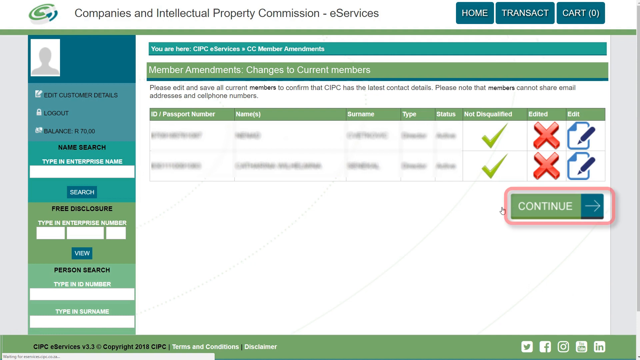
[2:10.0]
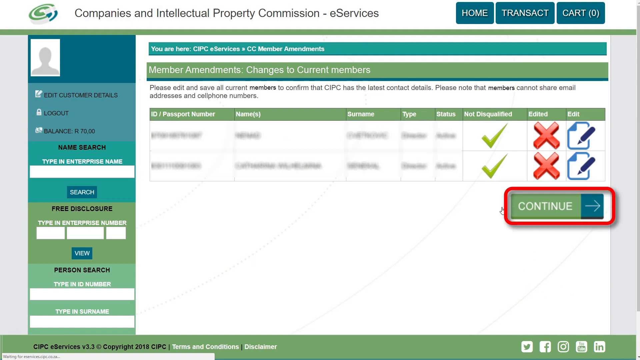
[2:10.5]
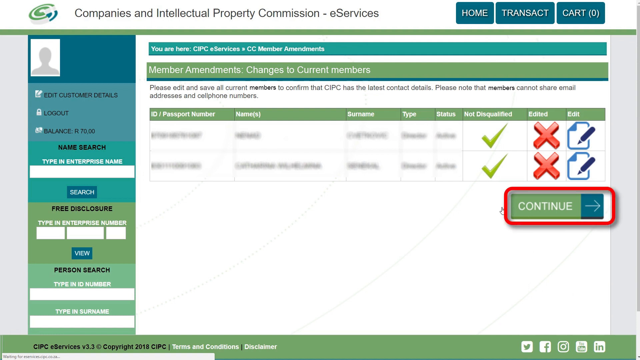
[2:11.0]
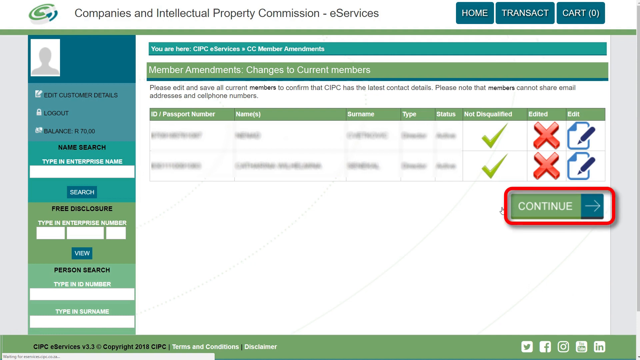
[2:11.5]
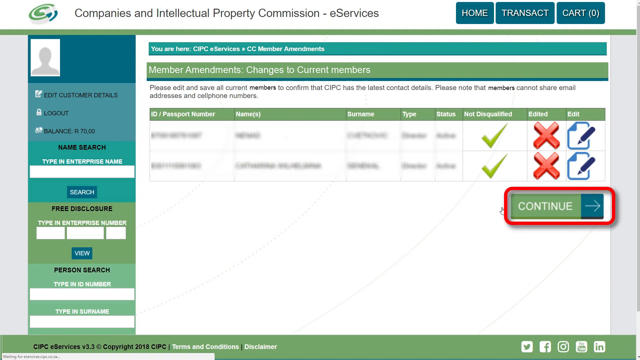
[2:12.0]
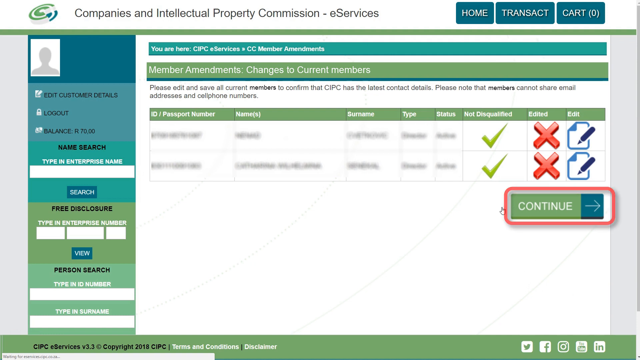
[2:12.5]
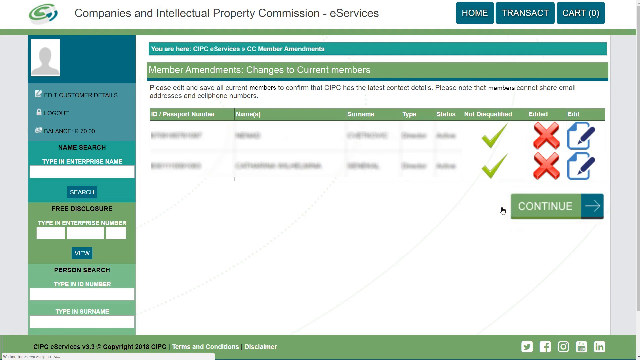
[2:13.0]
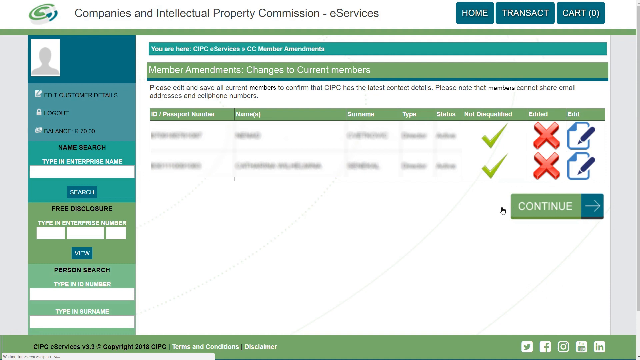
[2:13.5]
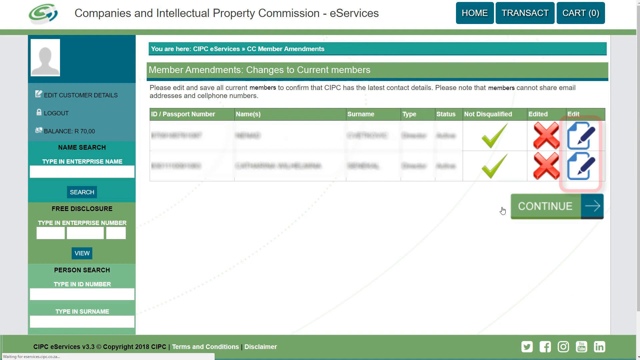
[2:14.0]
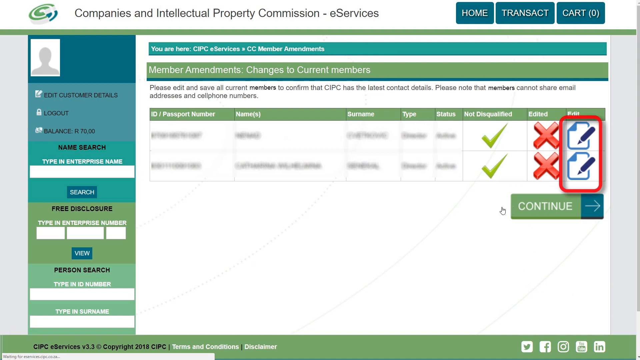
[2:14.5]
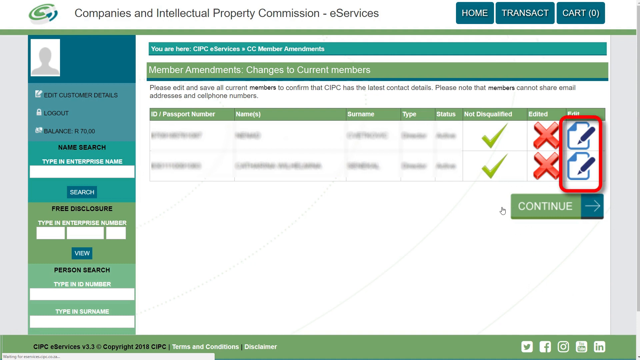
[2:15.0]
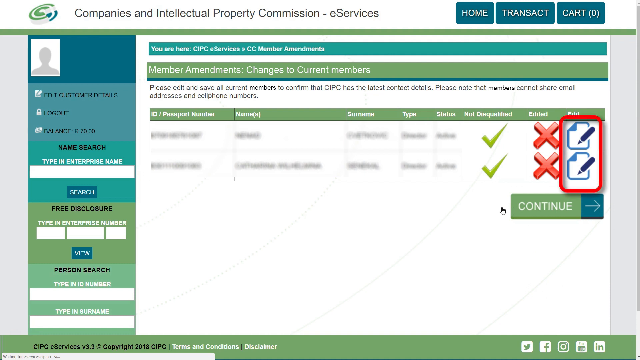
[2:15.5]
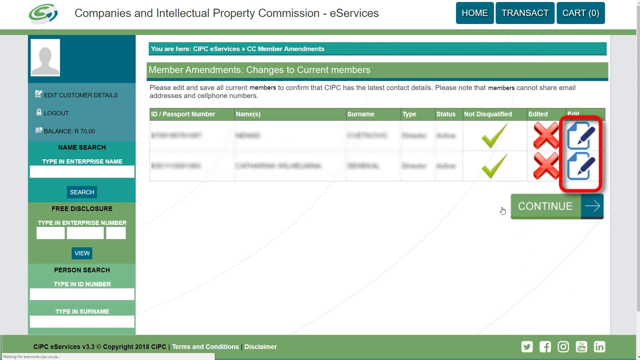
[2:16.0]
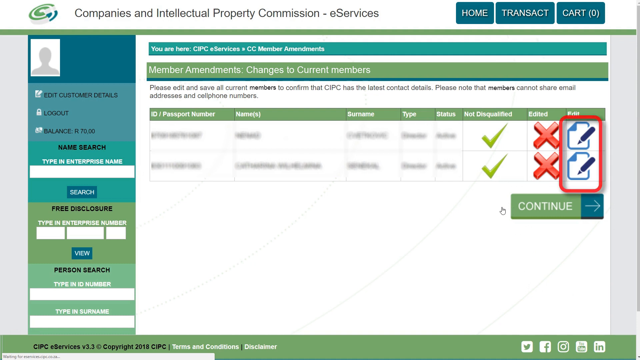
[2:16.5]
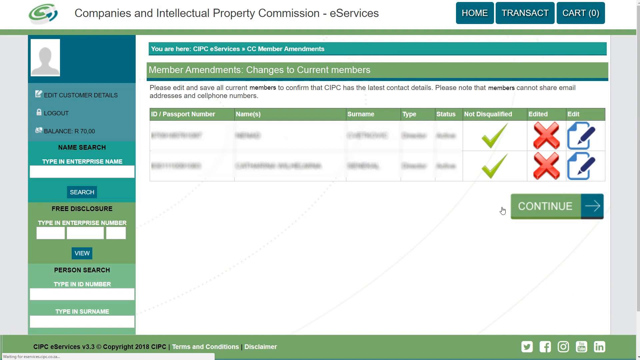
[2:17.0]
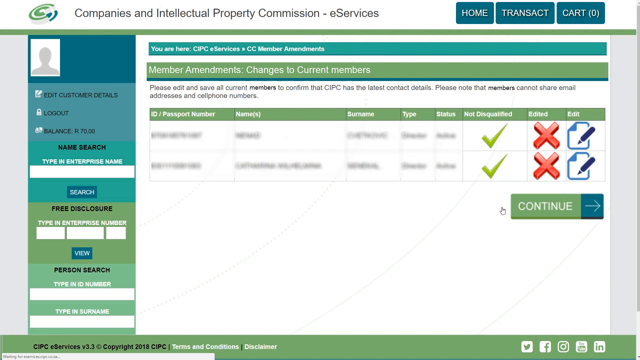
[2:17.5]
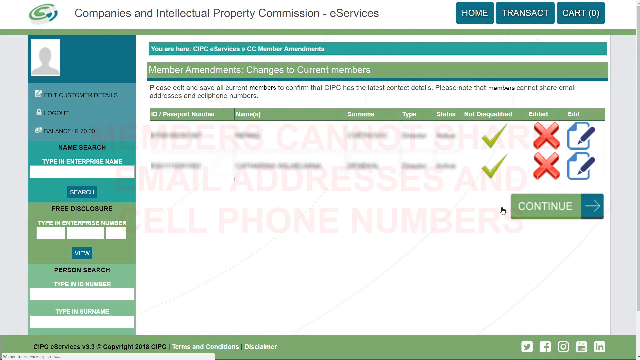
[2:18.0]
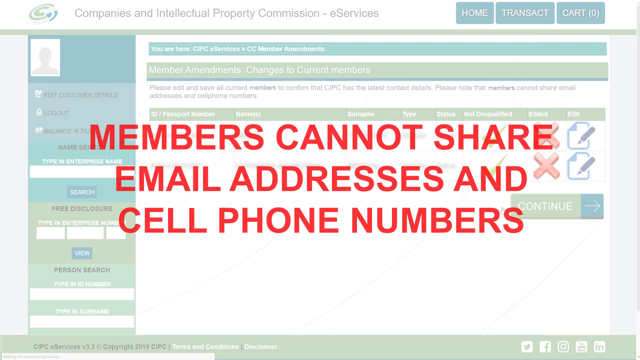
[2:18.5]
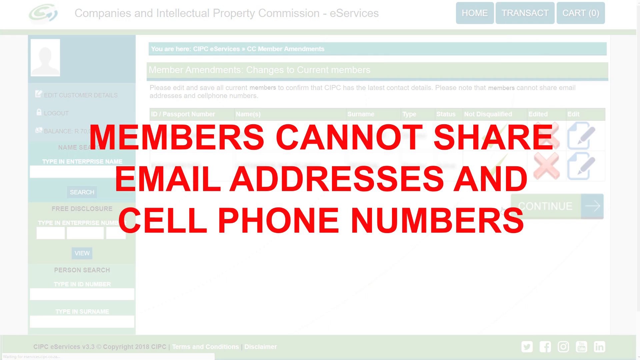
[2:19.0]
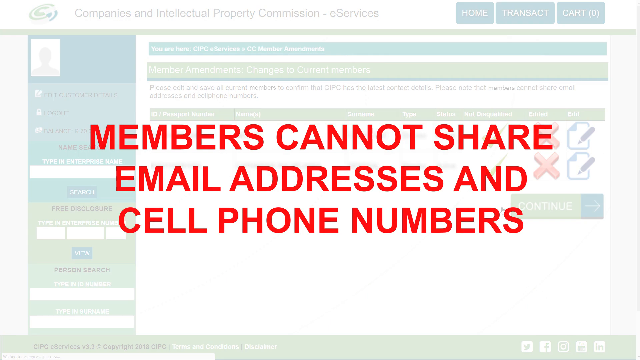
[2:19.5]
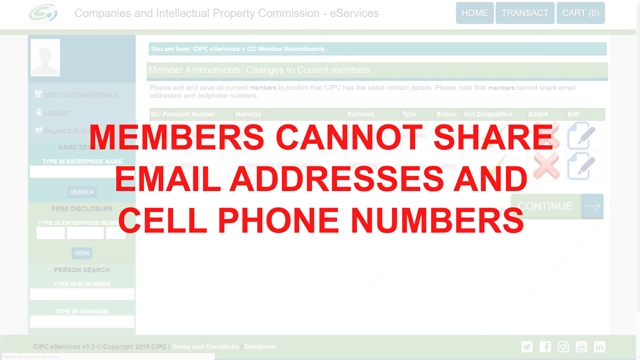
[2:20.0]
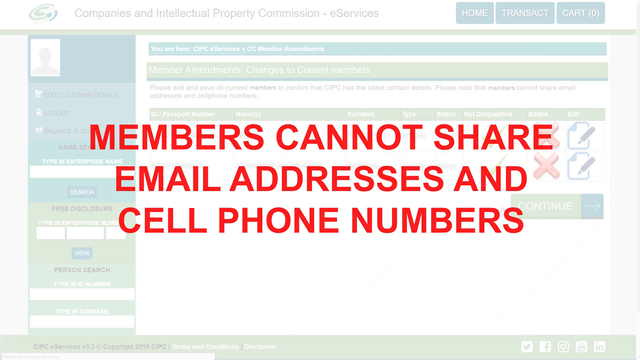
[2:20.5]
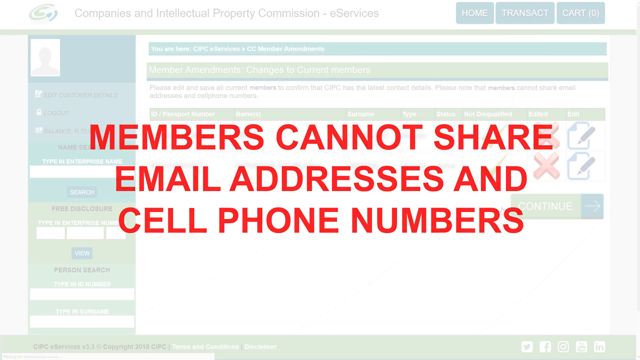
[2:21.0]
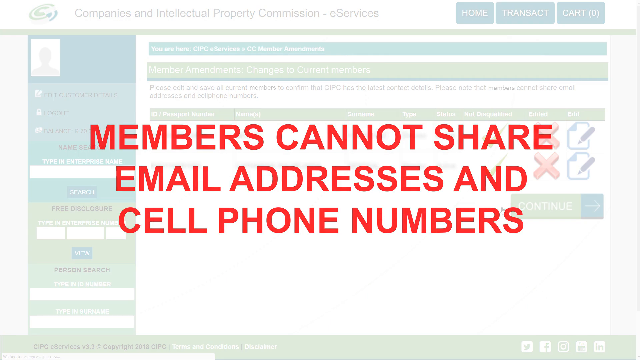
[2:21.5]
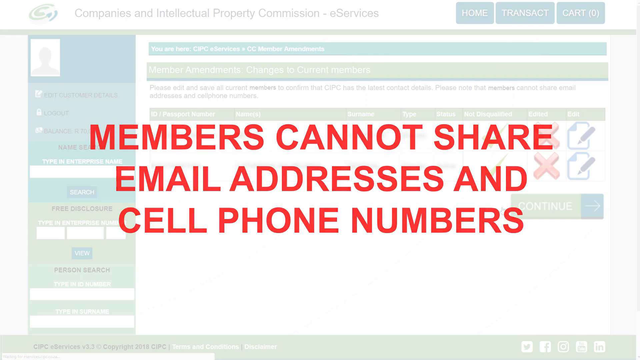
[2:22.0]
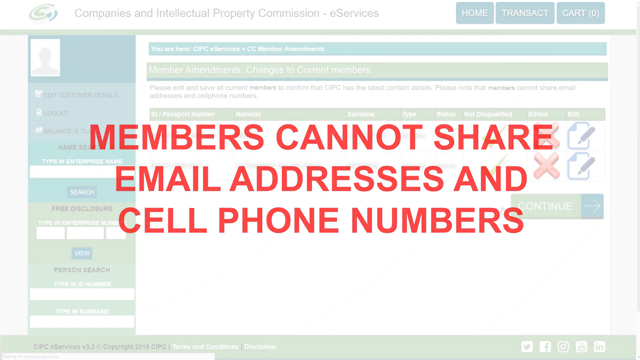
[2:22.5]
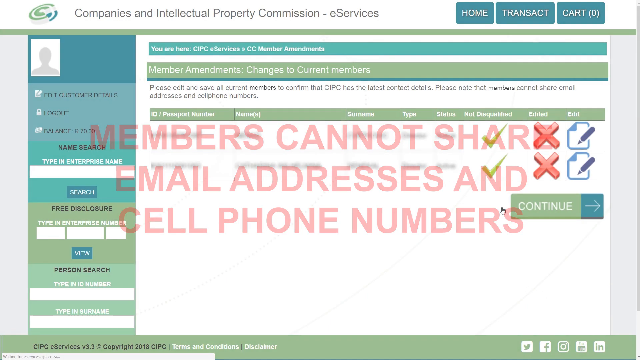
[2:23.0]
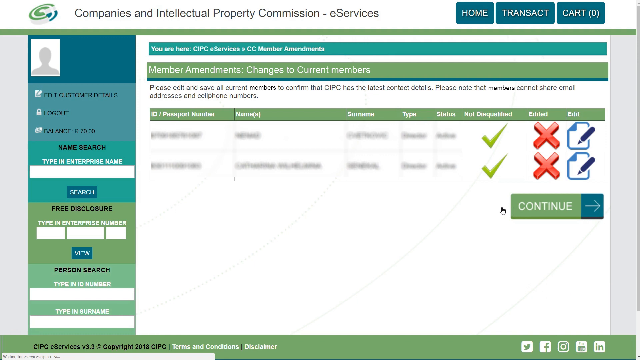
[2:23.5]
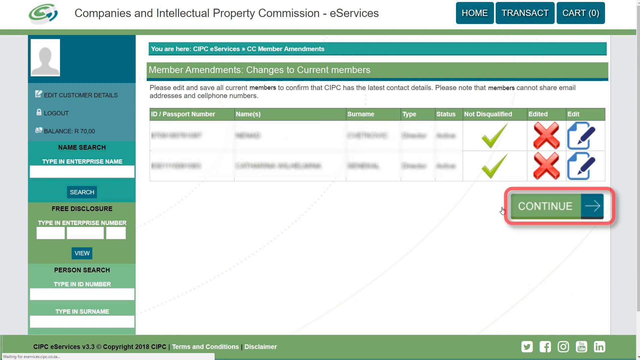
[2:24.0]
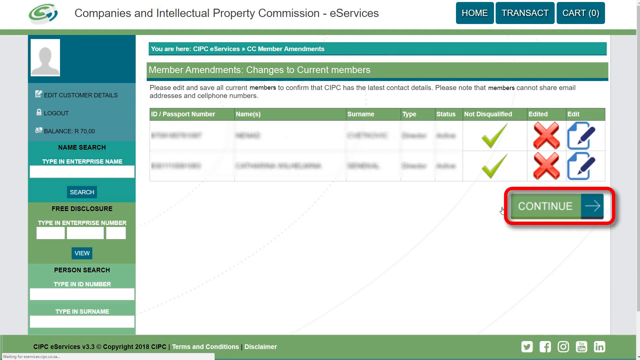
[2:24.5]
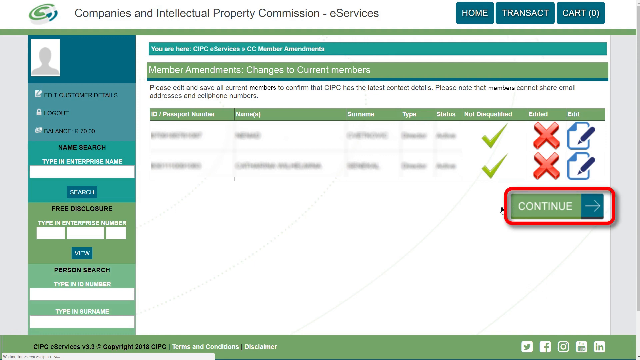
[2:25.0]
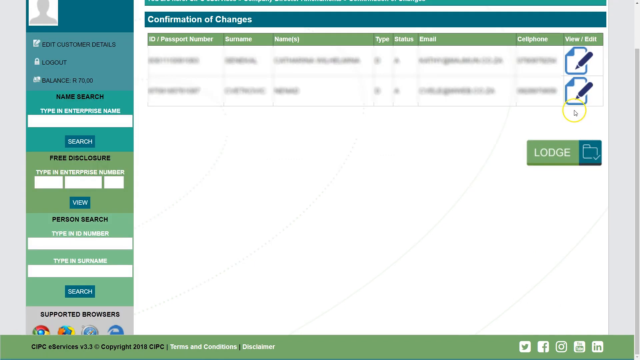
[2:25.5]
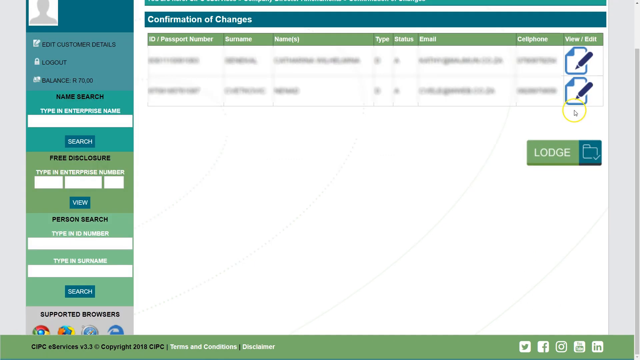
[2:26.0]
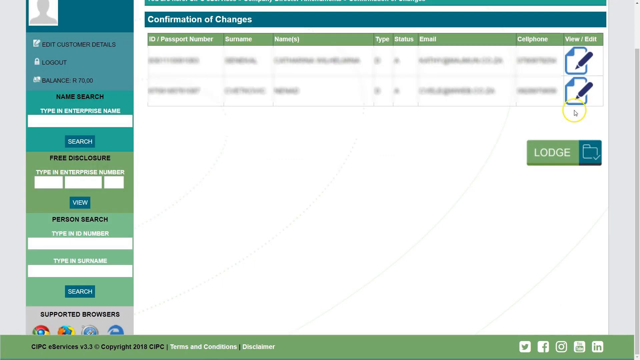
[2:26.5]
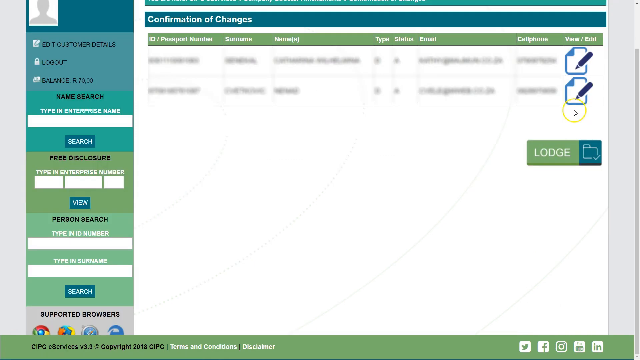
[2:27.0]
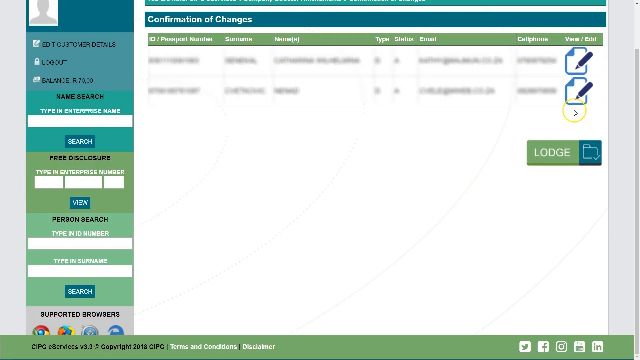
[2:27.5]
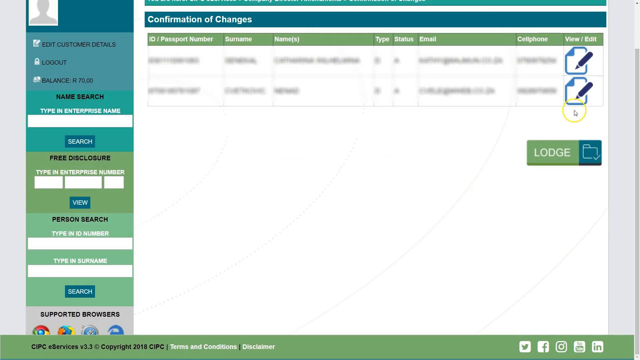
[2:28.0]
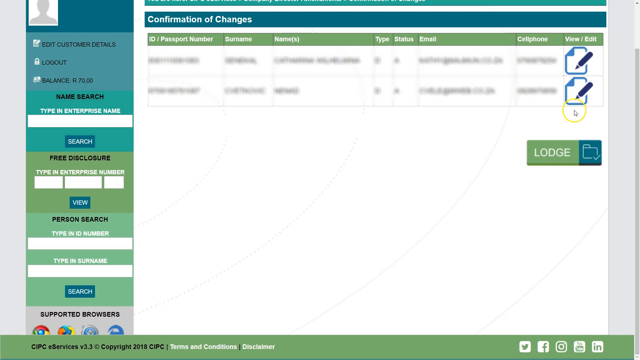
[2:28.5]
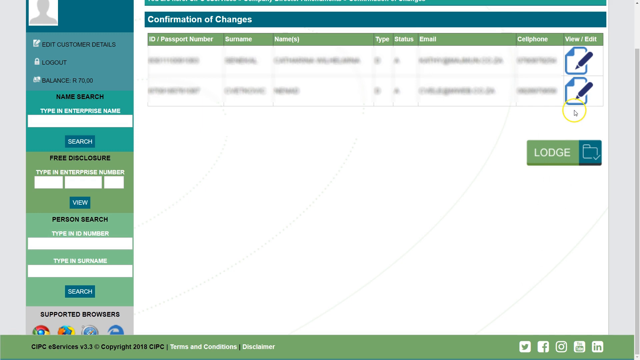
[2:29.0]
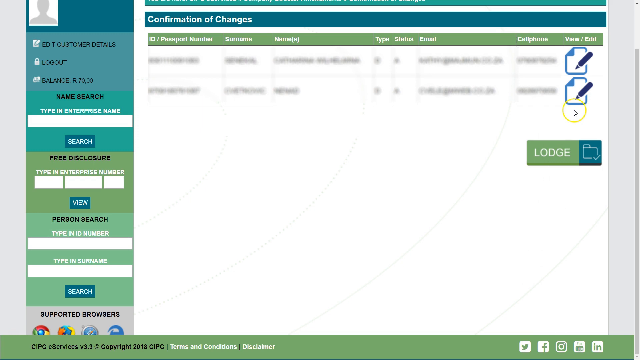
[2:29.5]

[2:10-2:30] A screen reads "Companies and Intellectual Property Commission e-Services," with Home, Transact, and Cart options. In the middle of the screen, "members cannot share e-mail addresses" appears in red; it shows quickly, disappears, and the screen comes back. There are fields for entering passport numbers, with Xs and check marks beside the information provided. An edit button shows an icon of a pad with a pencil, and a continue button is underneath. A profile picture is in the upper left-hand corner. There are options to search for a free disclosure, view a person search, and other items such as member amendments and changes. The e-services website asks for personal information in certain areas.